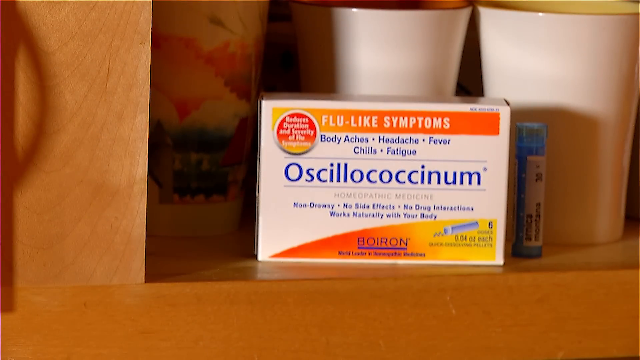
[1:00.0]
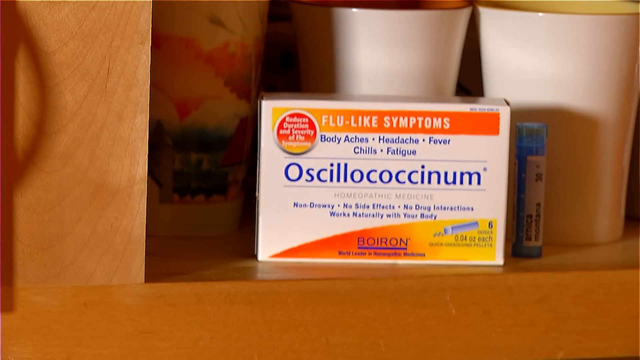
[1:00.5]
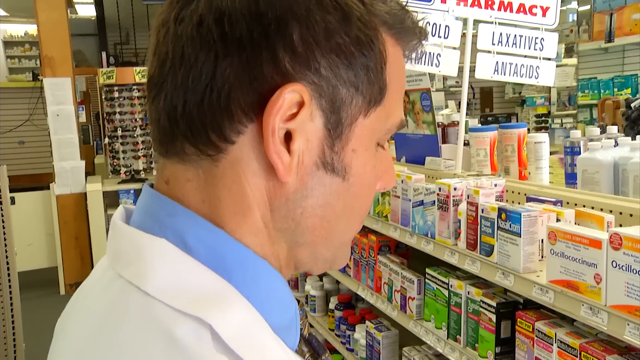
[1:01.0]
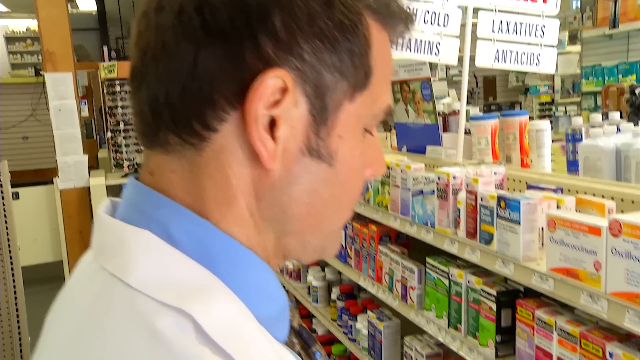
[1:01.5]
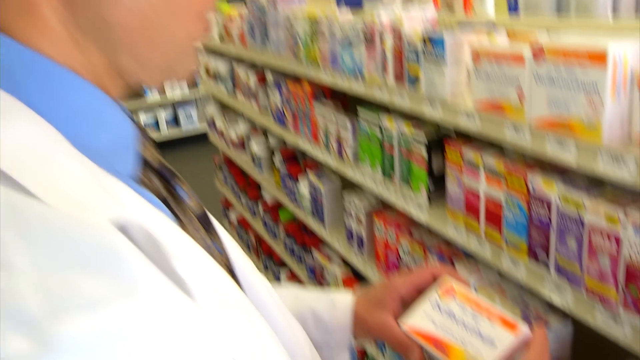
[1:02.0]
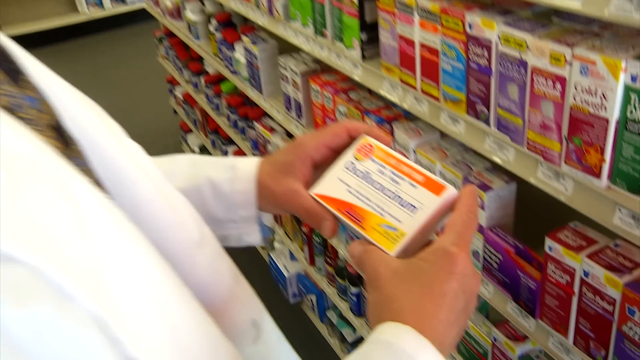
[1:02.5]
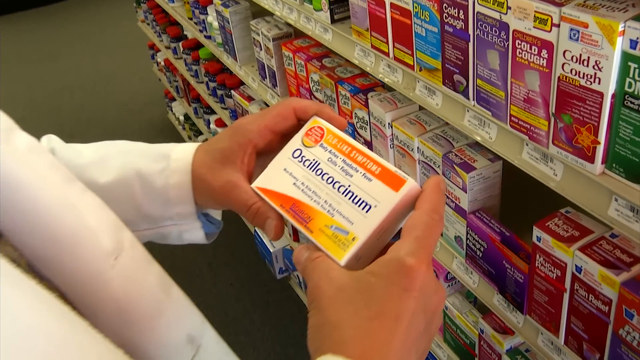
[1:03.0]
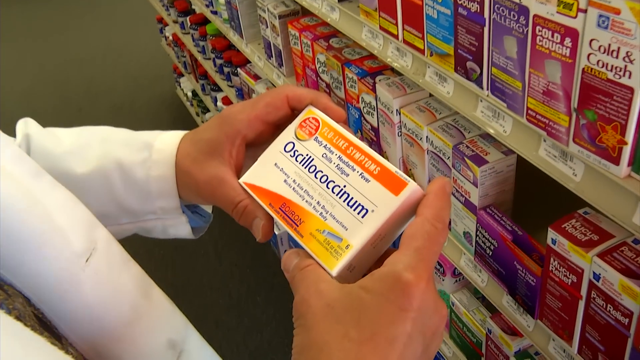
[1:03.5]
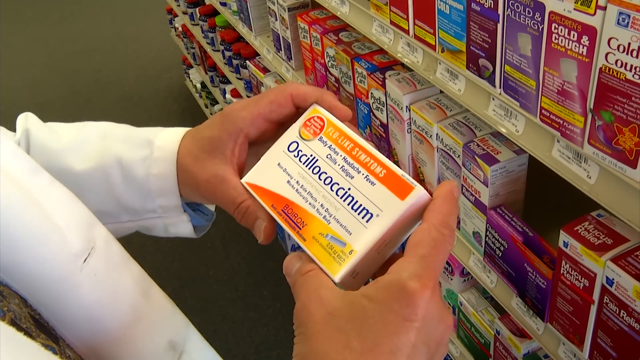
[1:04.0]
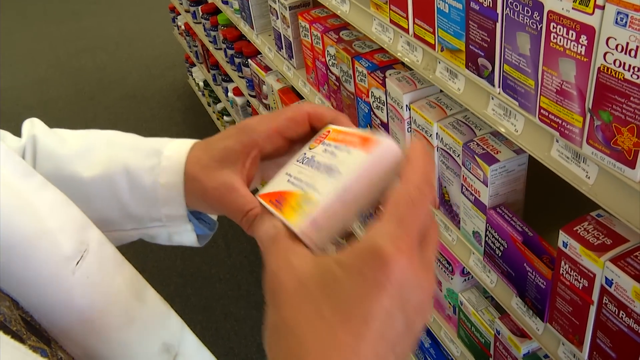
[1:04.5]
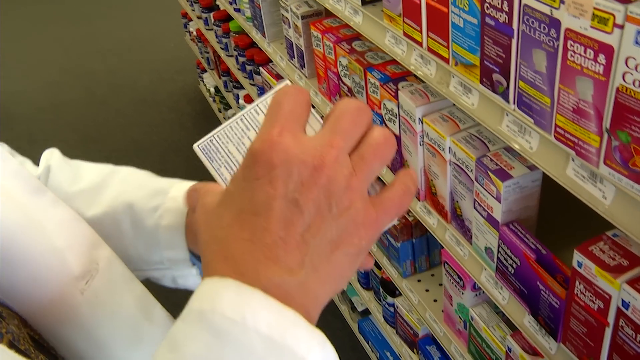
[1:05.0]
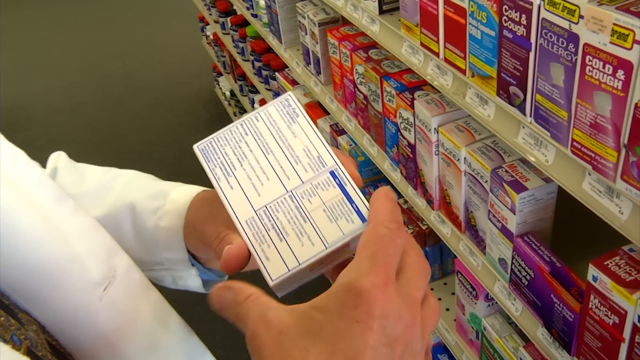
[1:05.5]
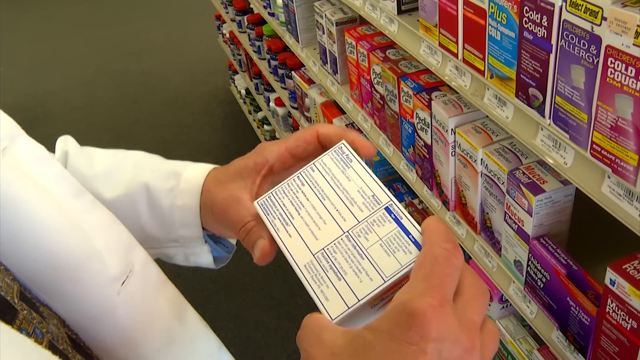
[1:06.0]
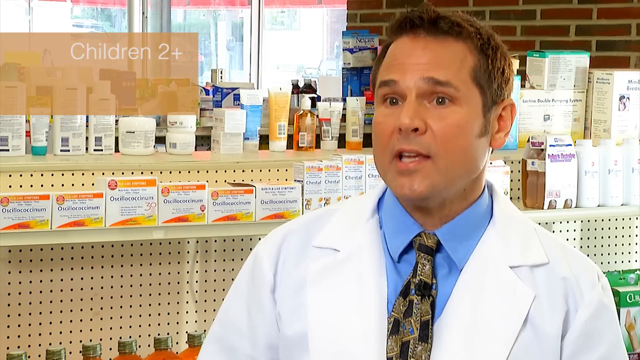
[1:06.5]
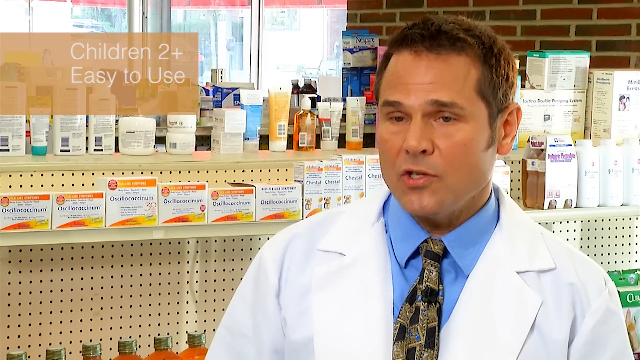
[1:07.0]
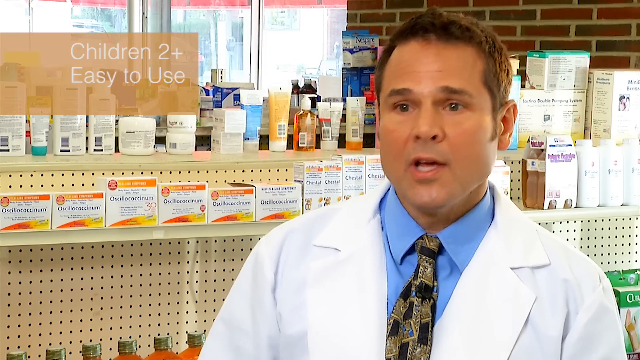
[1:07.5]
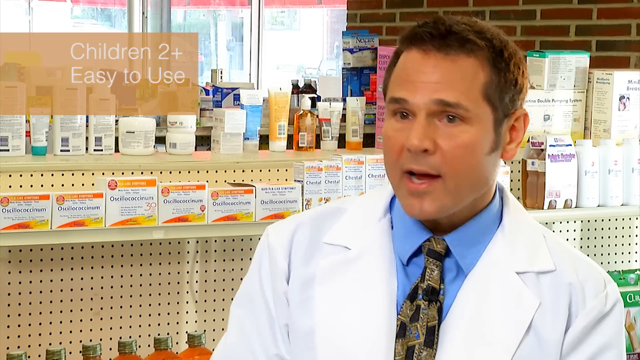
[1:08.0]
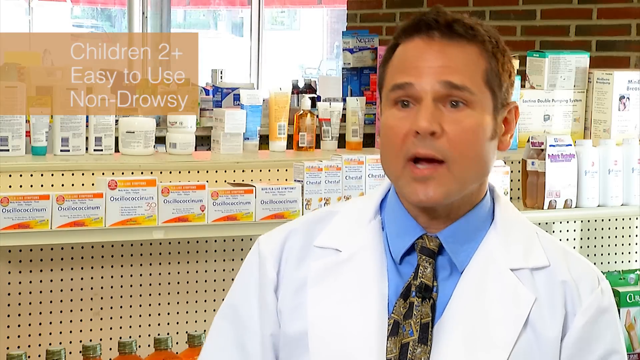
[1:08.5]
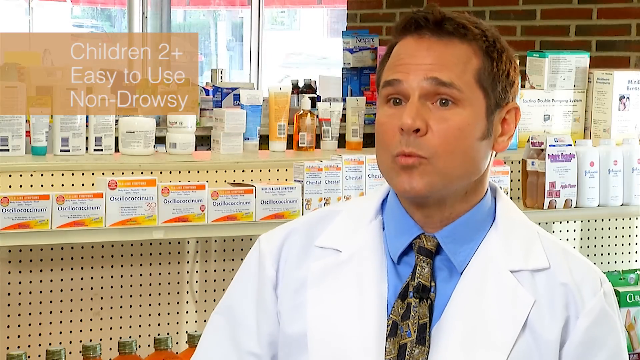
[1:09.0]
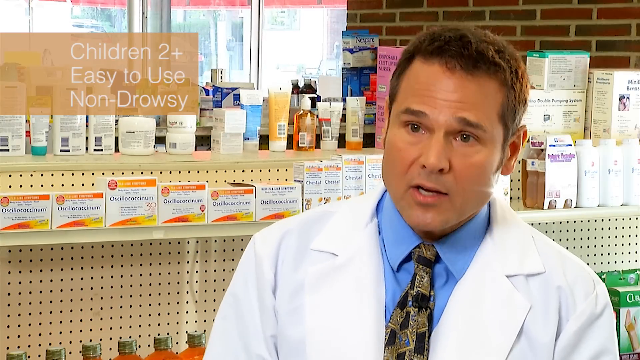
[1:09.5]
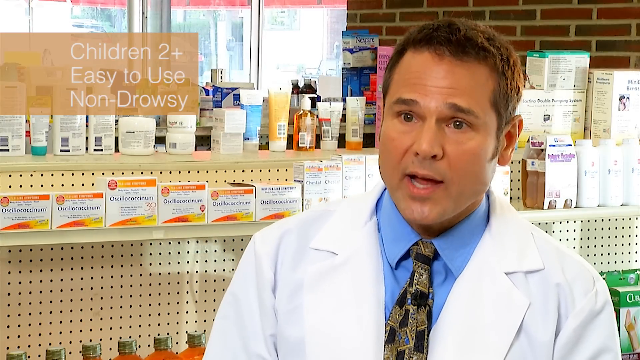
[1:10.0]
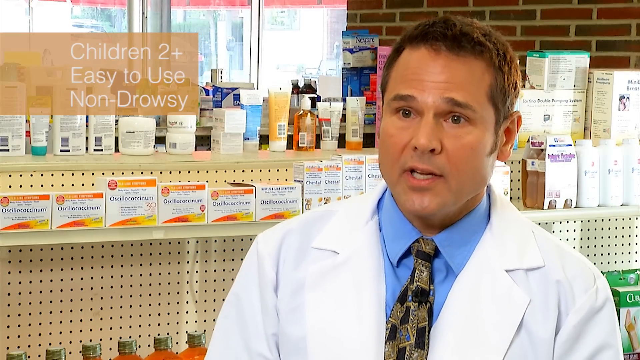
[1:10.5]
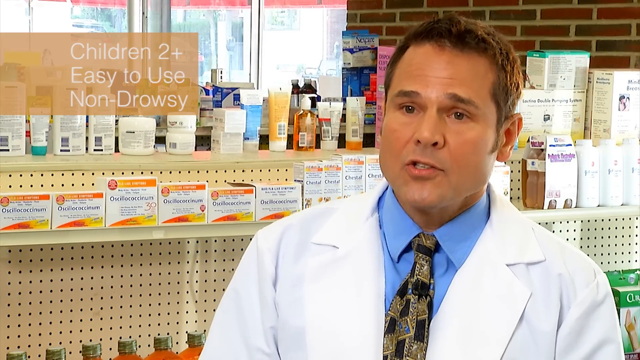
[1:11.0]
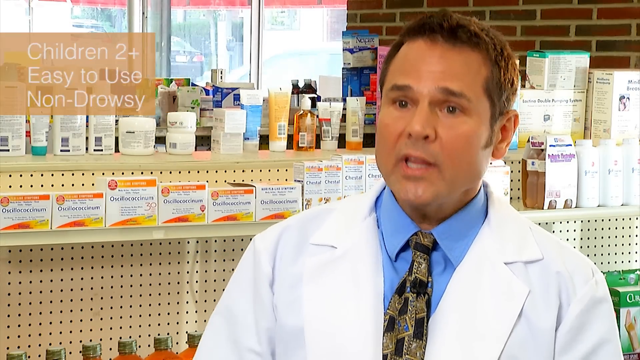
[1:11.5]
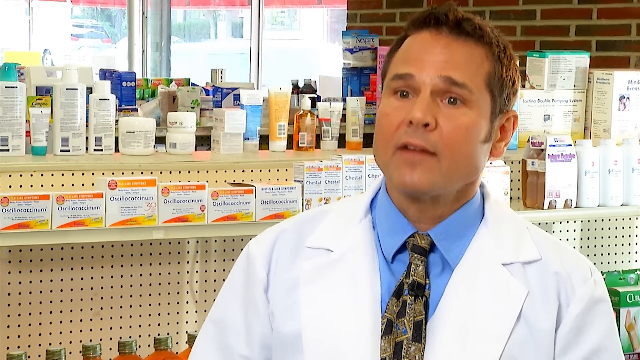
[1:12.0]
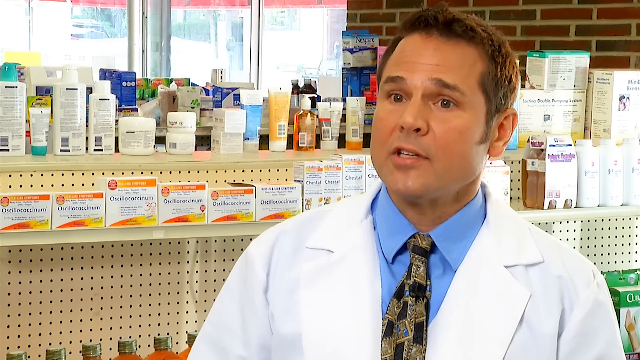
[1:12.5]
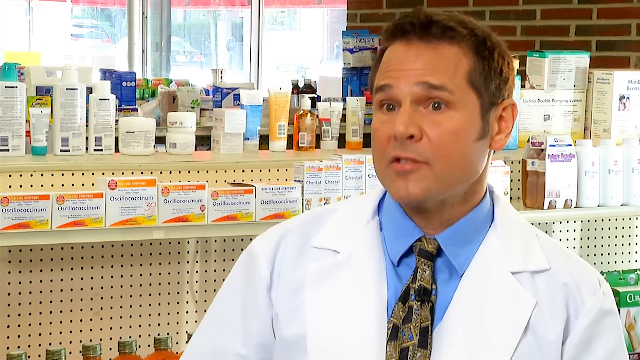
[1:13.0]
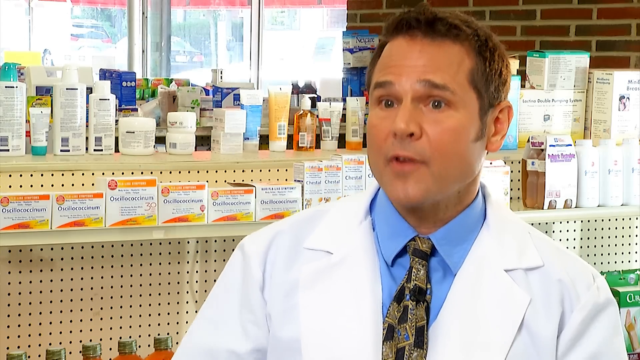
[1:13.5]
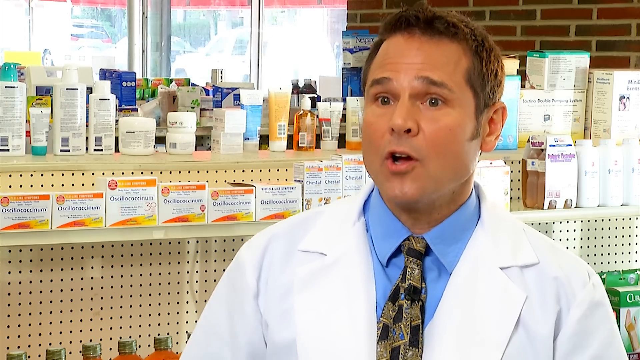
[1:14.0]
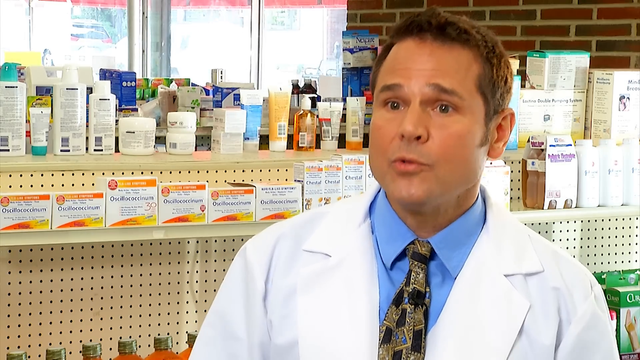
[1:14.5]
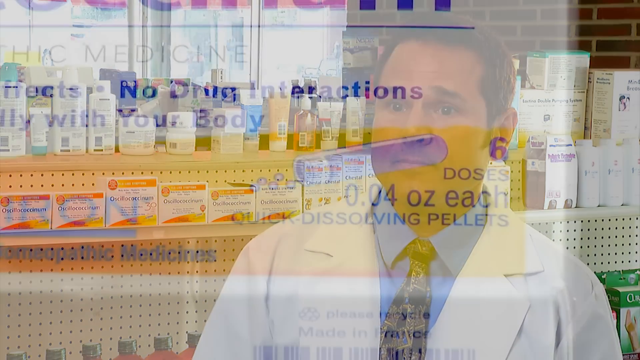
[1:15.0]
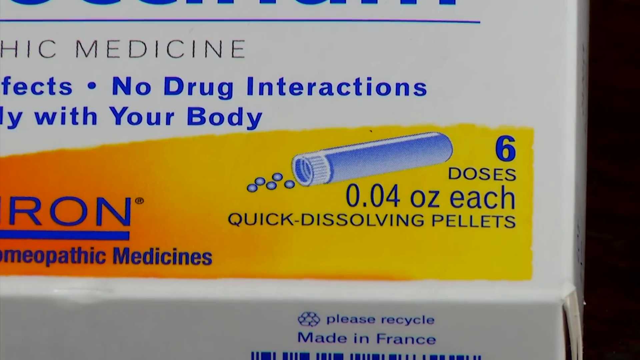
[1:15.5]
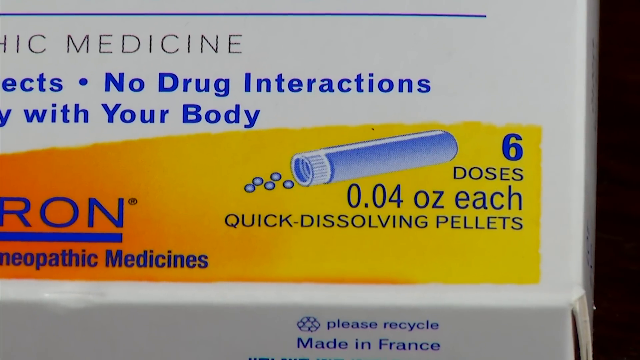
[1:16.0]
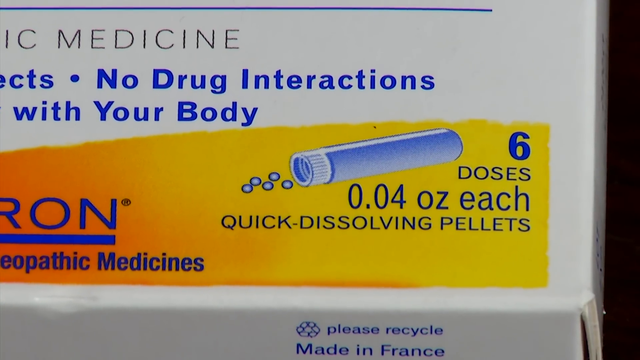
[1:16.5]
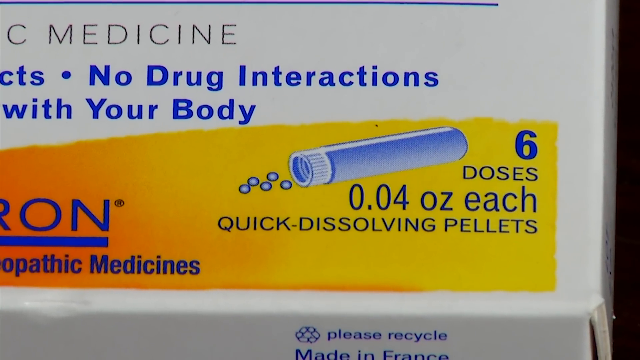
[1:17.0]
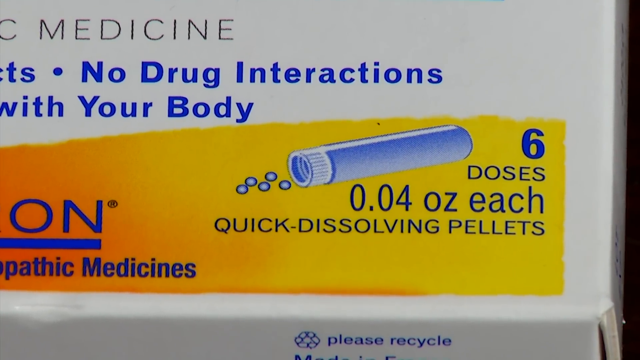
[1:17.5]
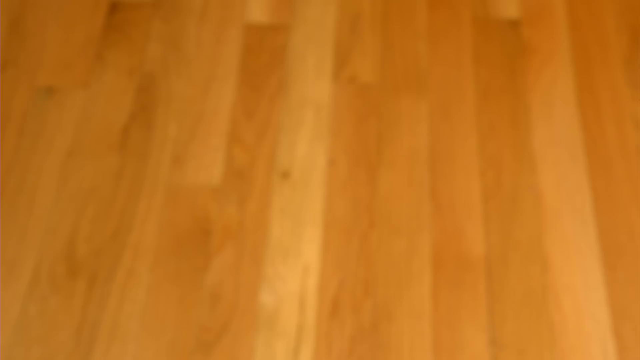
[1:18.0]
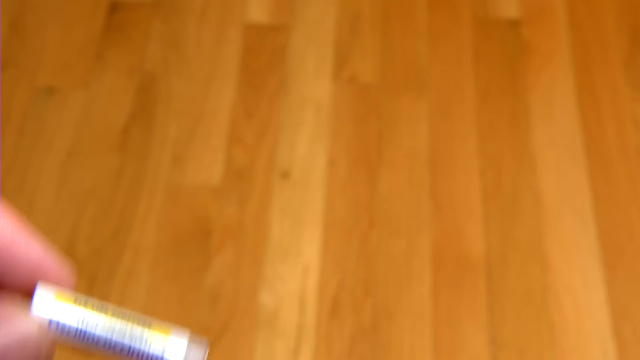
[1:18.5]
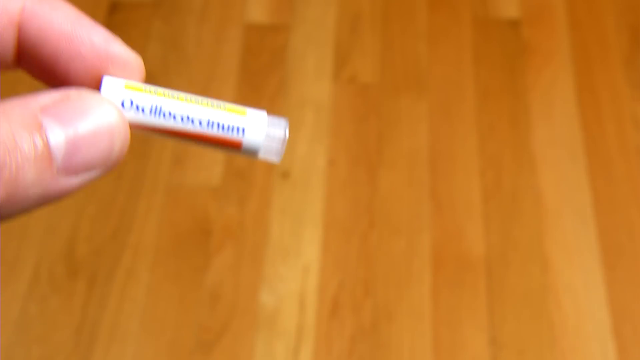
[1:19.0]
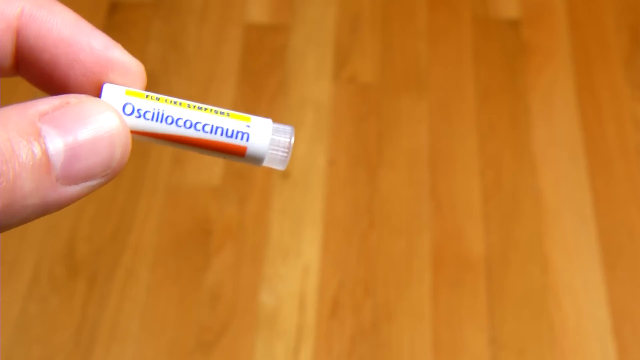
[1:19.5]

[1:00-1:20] A close-up shows a light brown wooden kitchen cabinet containing two coffee cups and a glass with a flower pattern. In front of them, on the base of the cabinet, is a packet of Oscillococcinum, a medication for flu-like symptoms. The image changes to the back of the head of a pharmacist wearing a white lab coat with a blue shirt underneath. He is looking at the medication in a pharmacy aisle, and the camera pans down to his hands, which hold a packet of the medication as he reads it. He turns the packet around to show the information on the back. The video then changes to him talking into the camera in front of the shelf containing the medication. The image zooms in on the bottom right of the packet, which states that it has six doses of 0.04 ounces each of quick dissolving pellets. Then there is a close-up of a left hand holding what appears to be a tube containing the medication.